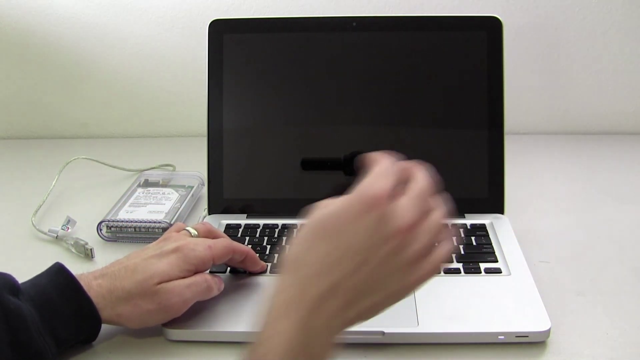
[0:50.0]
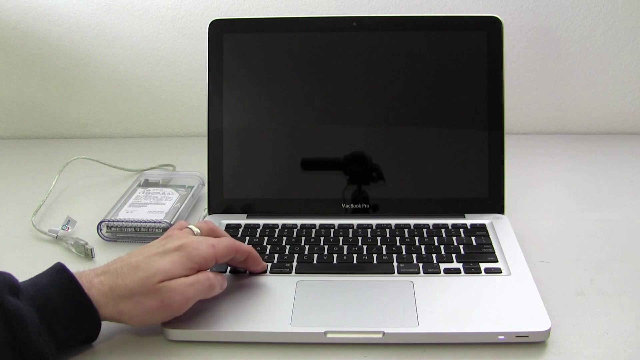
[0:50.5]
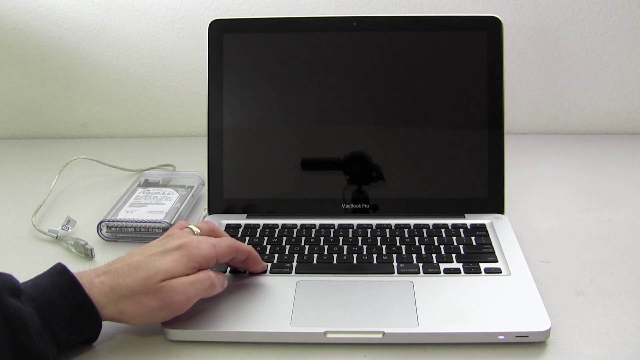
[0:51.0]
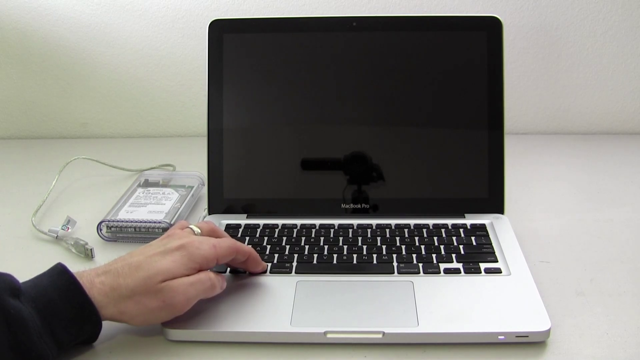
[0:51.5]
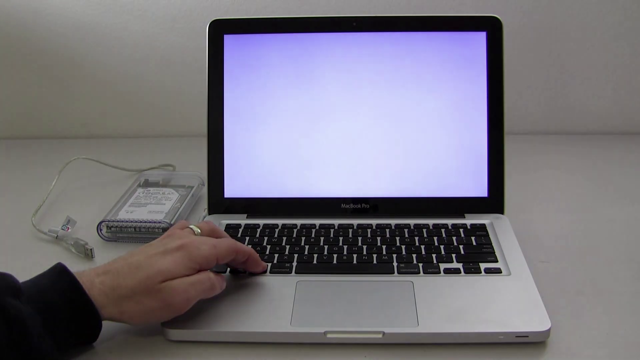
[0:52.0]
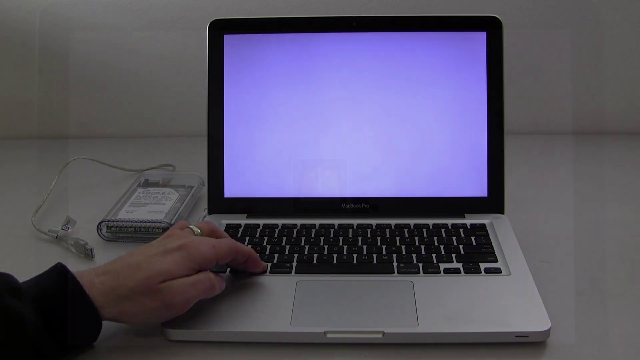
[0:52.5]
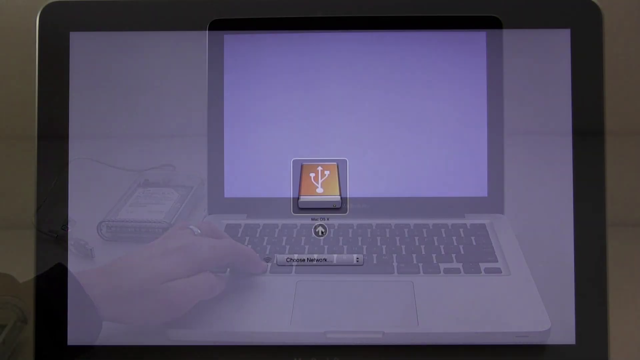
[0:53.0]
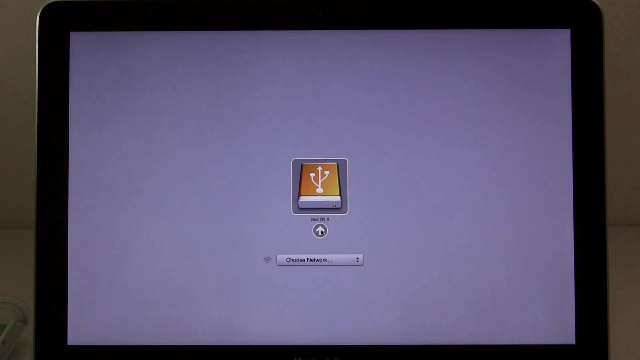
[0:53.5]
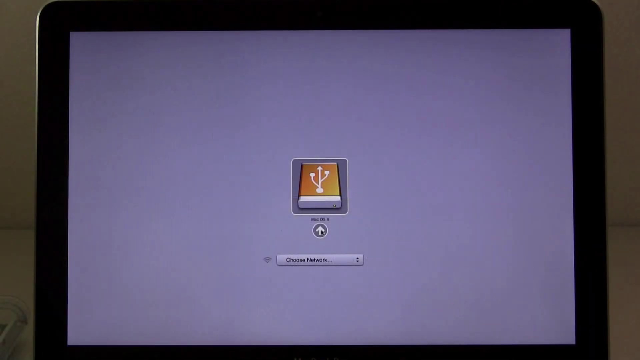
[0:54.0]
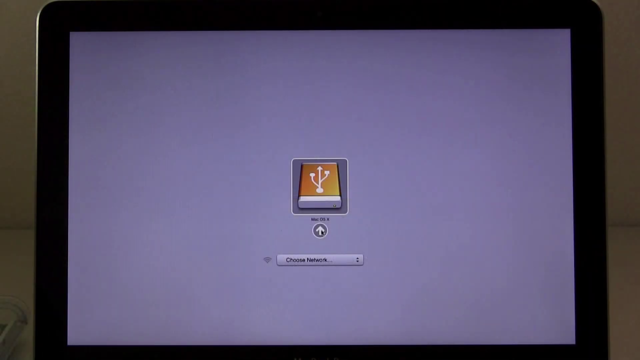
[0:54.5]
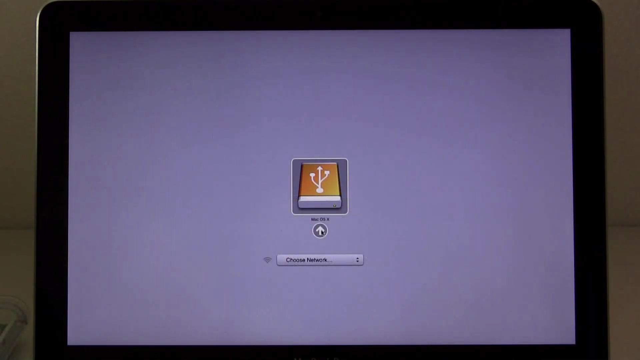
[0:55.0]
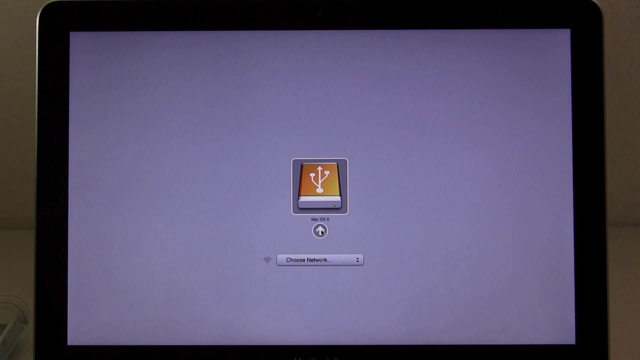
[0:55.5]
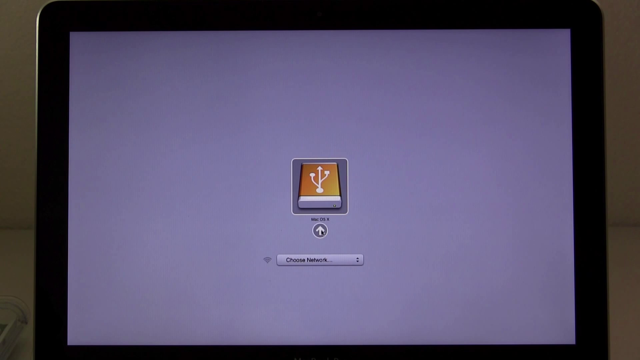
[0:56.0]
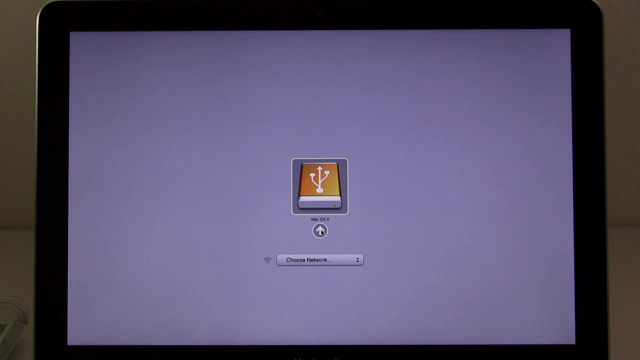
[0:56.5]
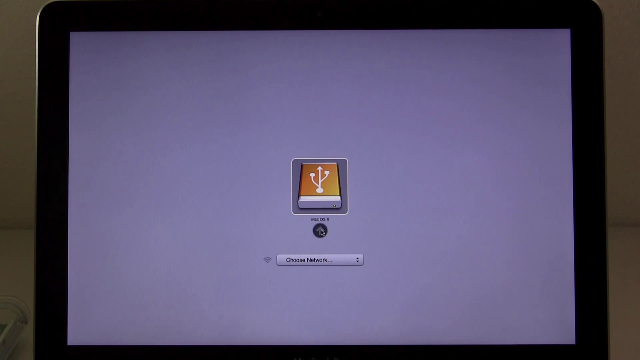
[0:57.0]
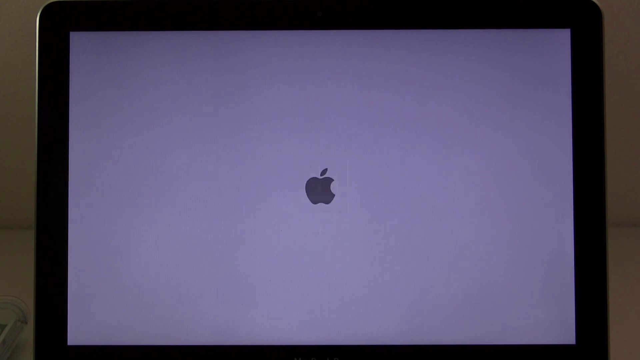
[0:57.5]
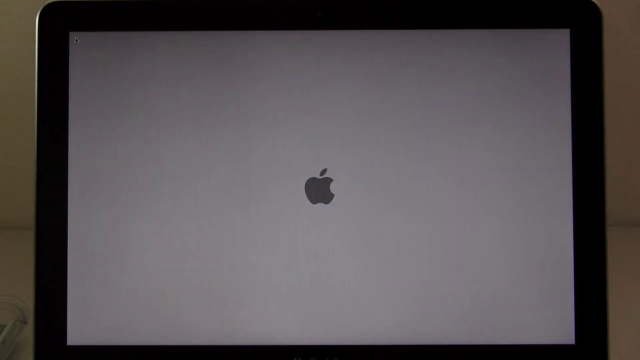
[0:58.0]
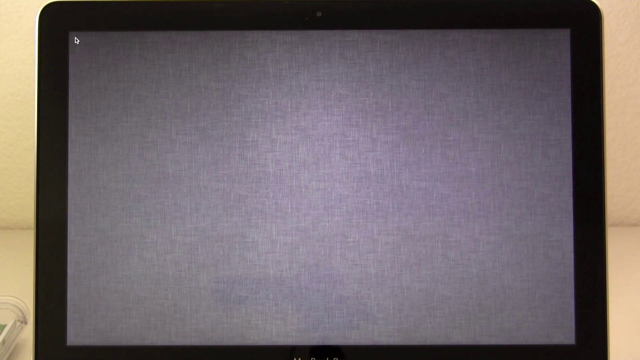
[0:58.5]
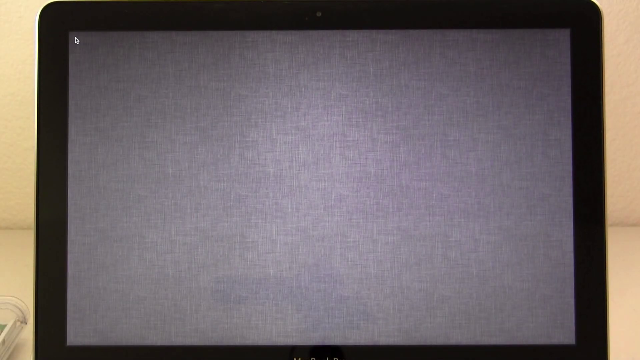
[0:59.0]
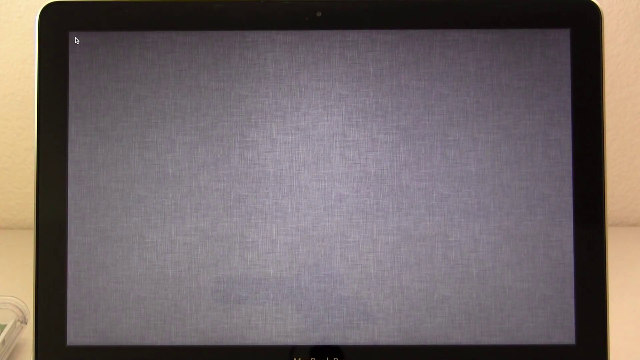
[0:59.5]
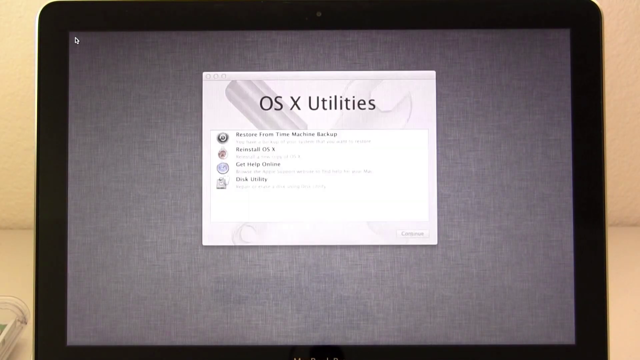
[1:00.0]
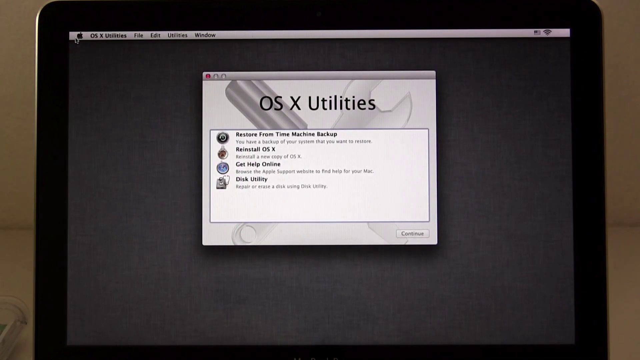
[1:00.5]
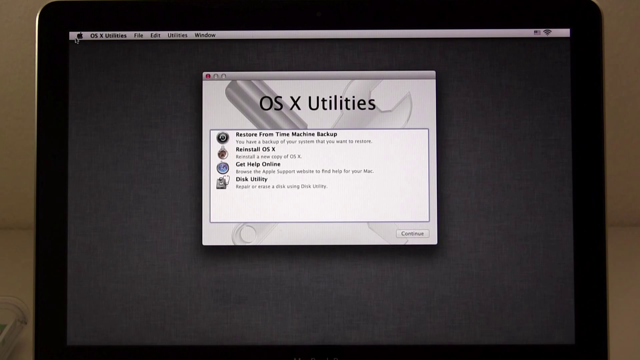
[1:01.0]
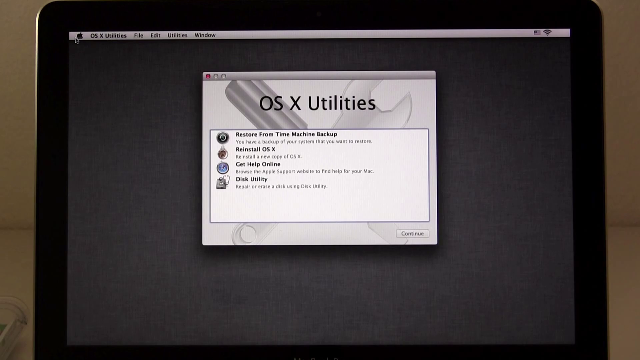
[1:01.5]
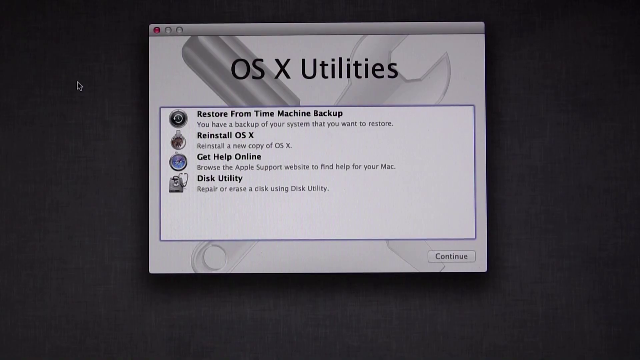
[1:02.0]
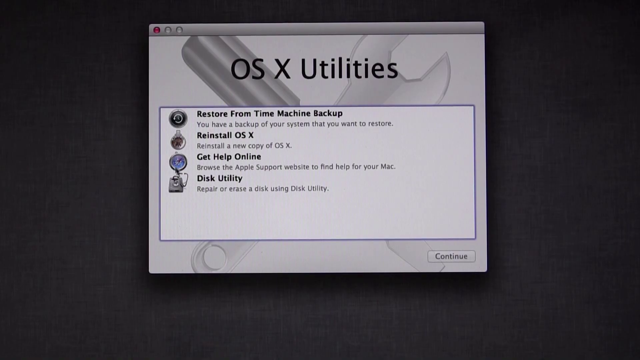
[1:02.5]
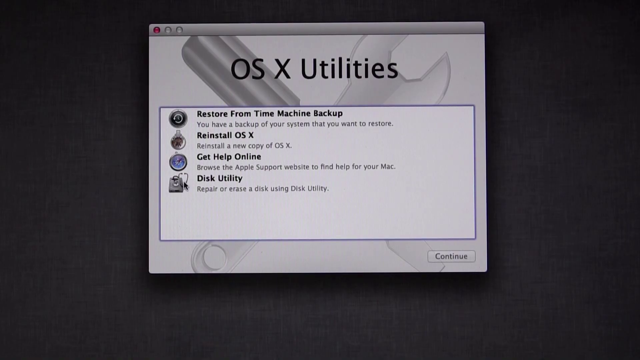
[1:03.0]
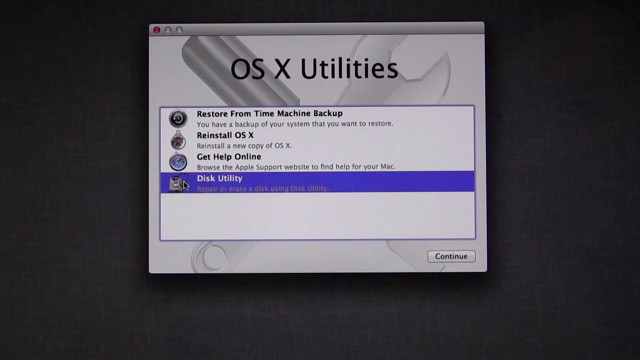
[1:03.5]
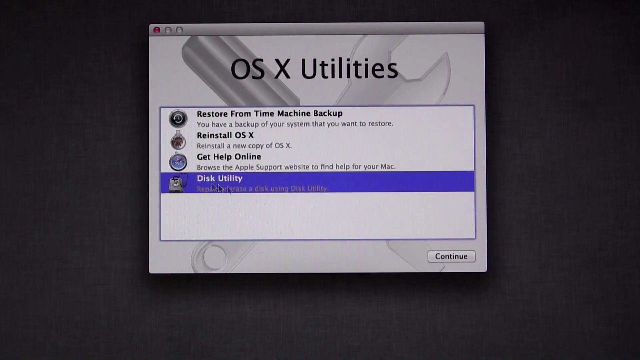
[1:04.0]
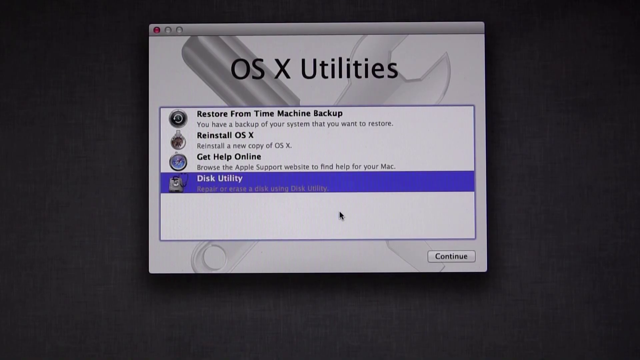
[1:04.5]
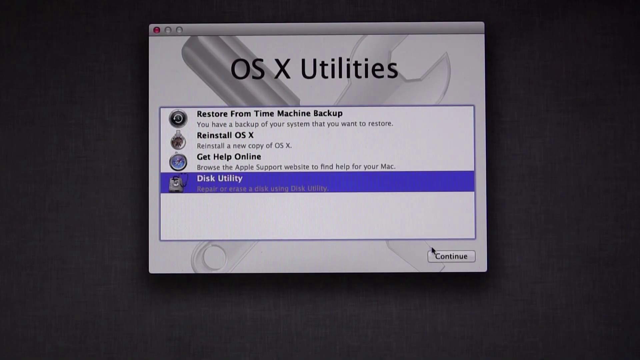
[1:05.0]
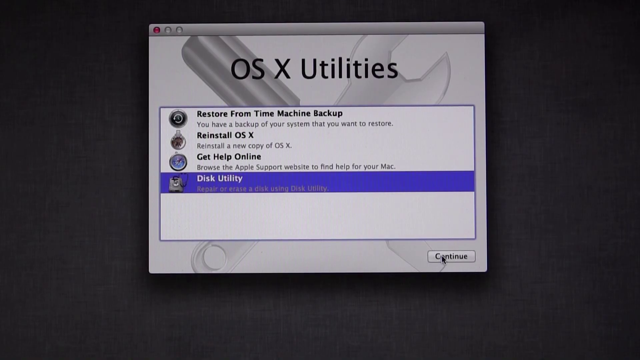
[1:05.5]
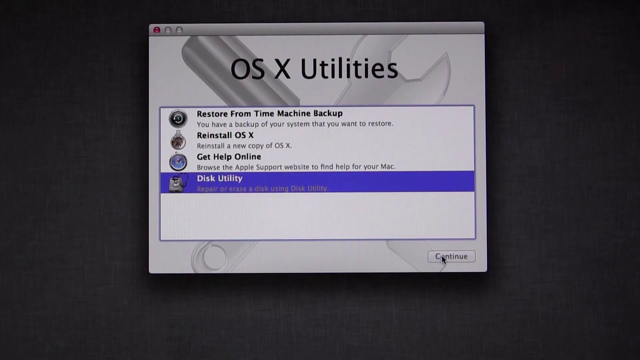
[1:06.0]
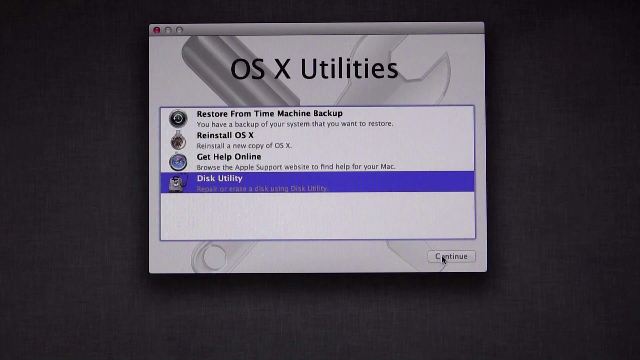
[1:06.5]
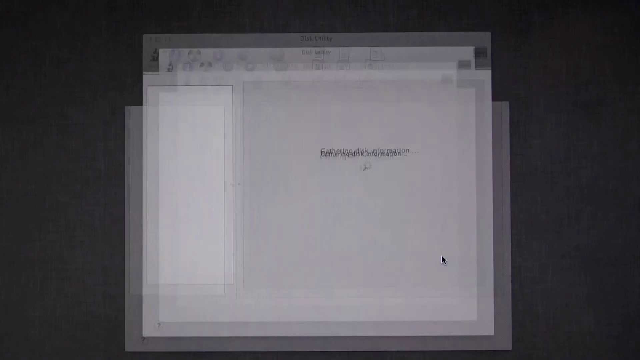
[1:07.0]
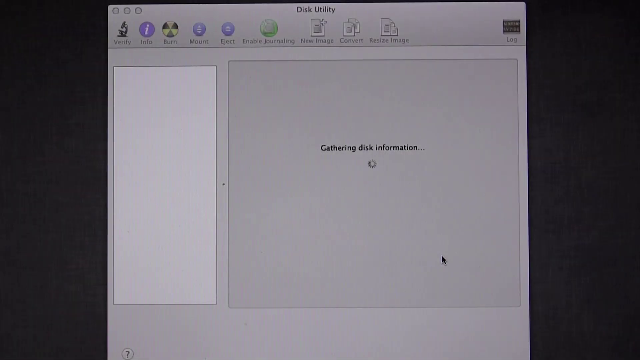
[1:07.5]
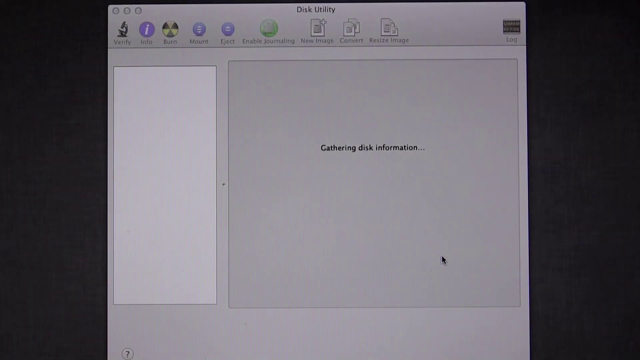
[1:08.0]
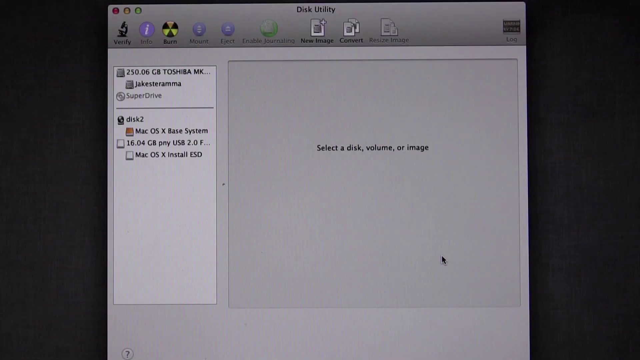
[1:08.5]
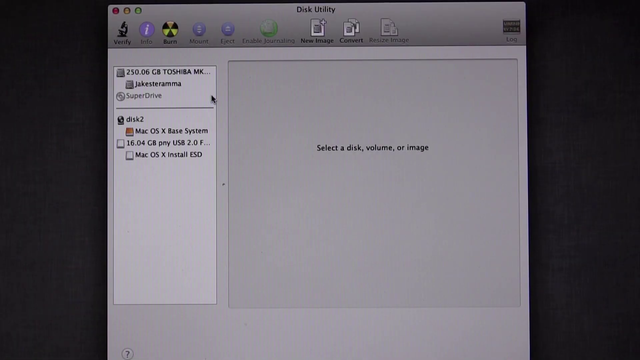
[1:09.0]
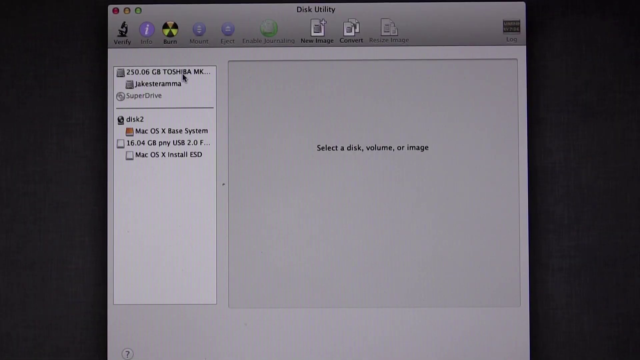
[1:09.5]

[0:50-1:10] The person is still working on the keyboard, holding down the Control key. The camera zooms in on the computer, where there is an unfamiliar icon, possibly for a program, with "choose network" below it. Then an Apple symbol appears, the screen goes blank, and "OSX Utilities" comes up on the screen with options including "restore from time machine backup," "Reinstall OSX," and "disk utility." The person clicks on Disk Utility, which lights up in blue, and hits Enter. The screen loads, and the person clicks another location; it is difficult to see exactly what was clicked, but it says "250.06GB Toshiba MK," possibly the disk being worked on.